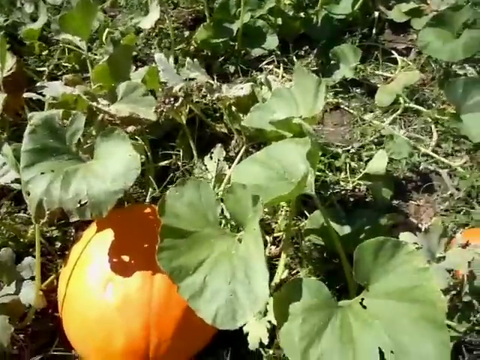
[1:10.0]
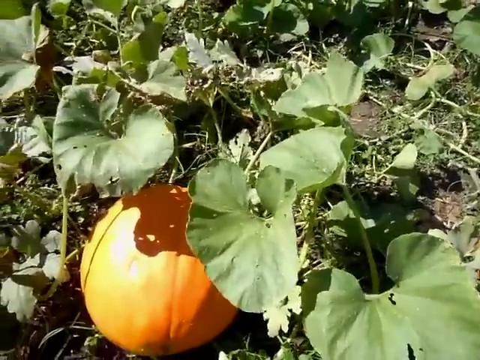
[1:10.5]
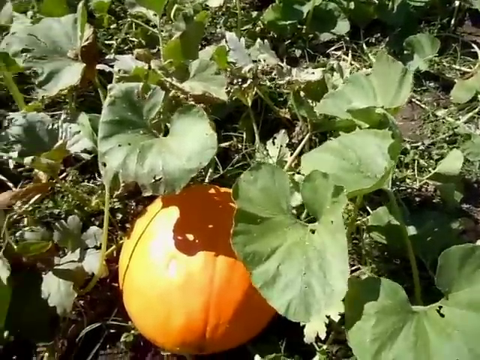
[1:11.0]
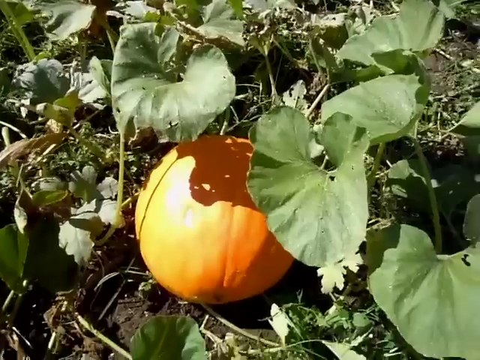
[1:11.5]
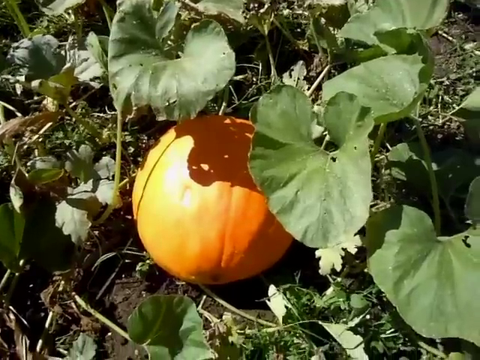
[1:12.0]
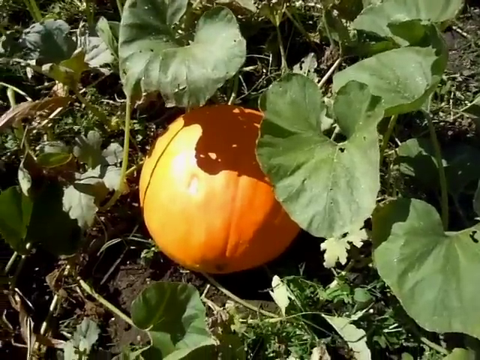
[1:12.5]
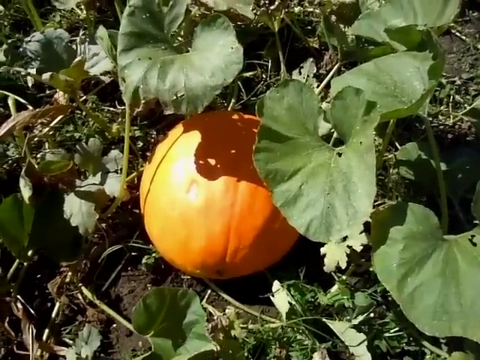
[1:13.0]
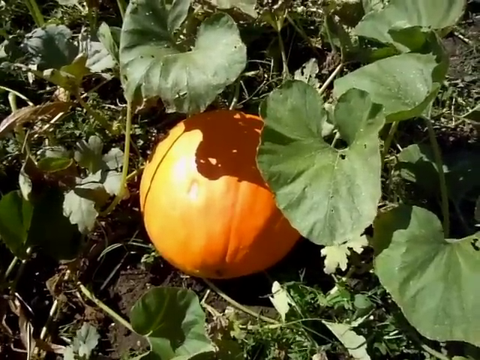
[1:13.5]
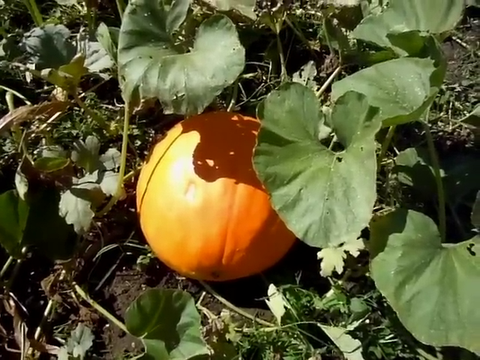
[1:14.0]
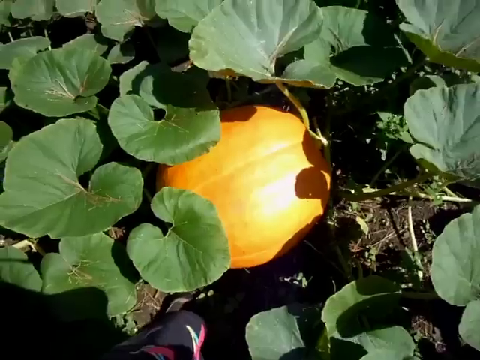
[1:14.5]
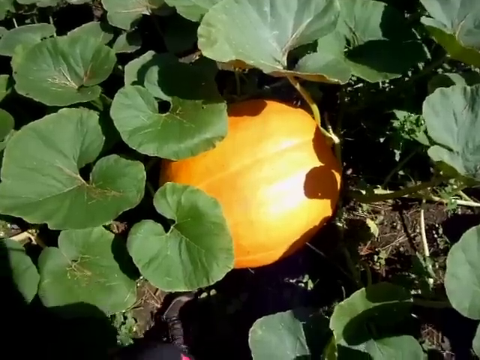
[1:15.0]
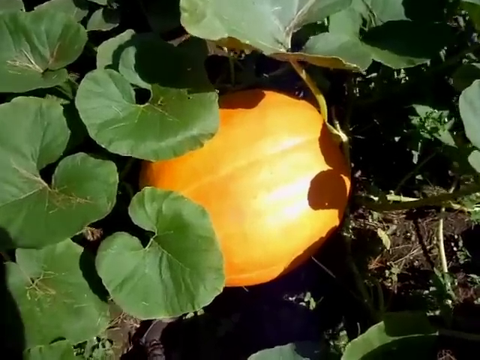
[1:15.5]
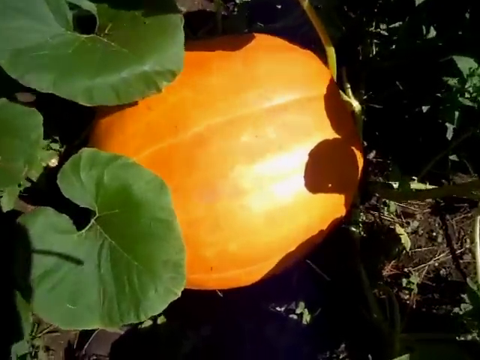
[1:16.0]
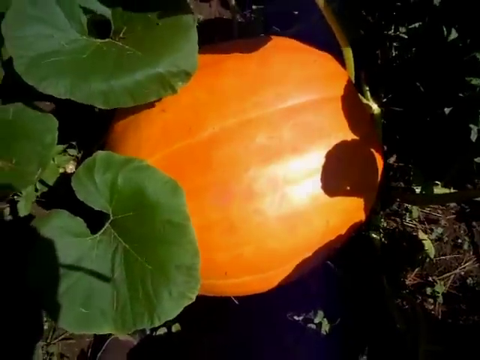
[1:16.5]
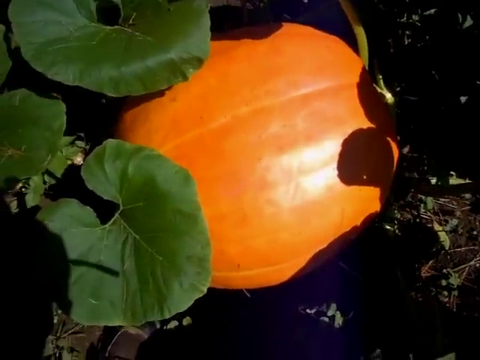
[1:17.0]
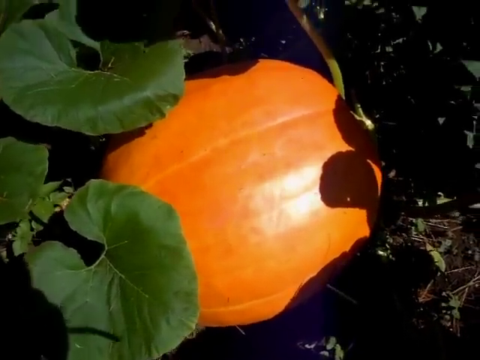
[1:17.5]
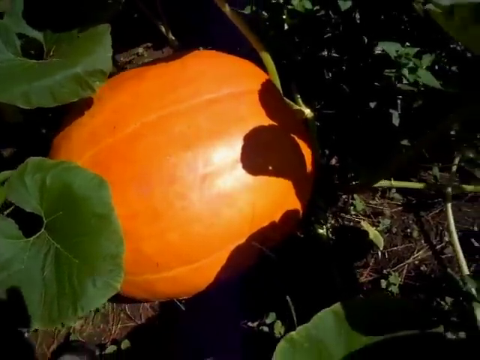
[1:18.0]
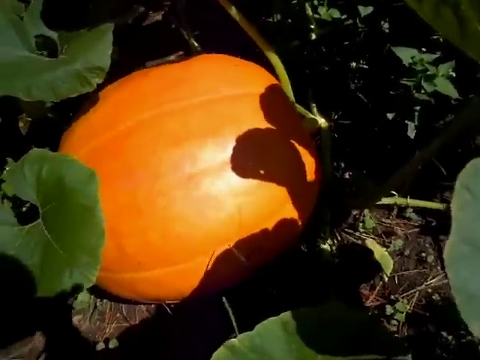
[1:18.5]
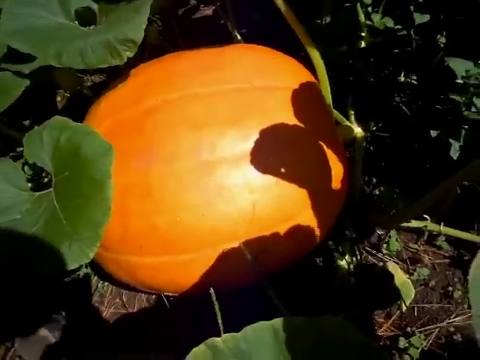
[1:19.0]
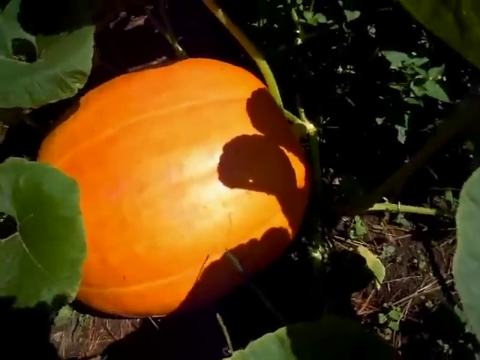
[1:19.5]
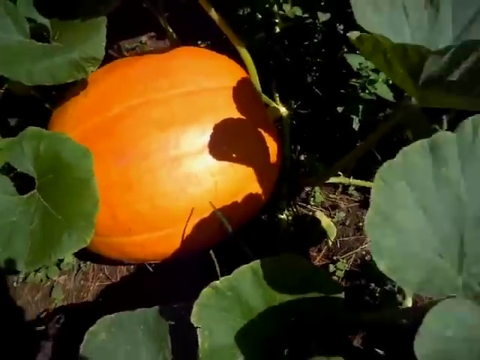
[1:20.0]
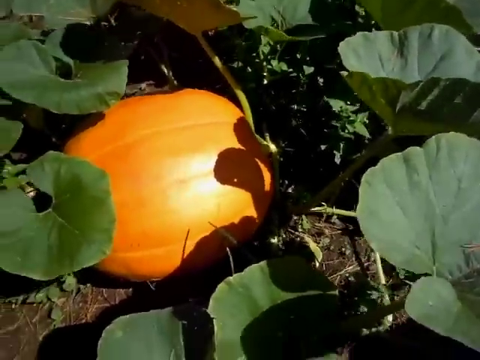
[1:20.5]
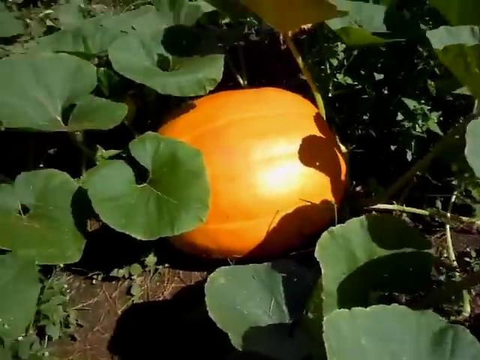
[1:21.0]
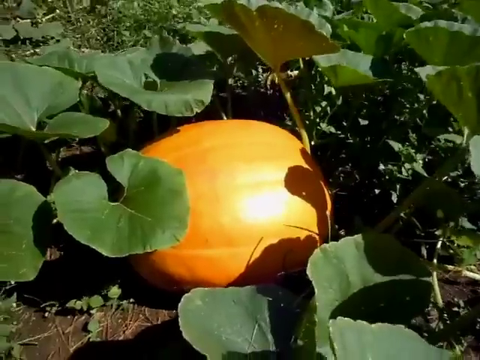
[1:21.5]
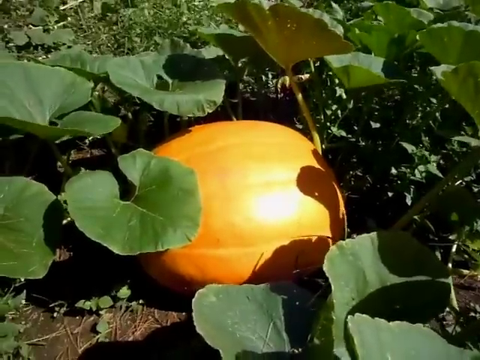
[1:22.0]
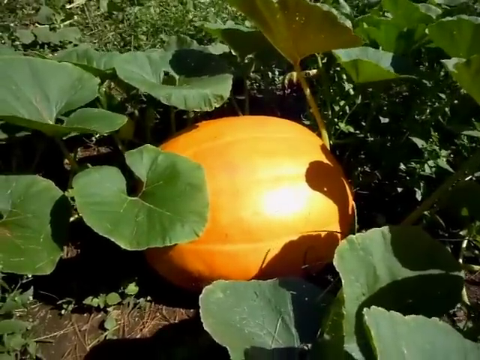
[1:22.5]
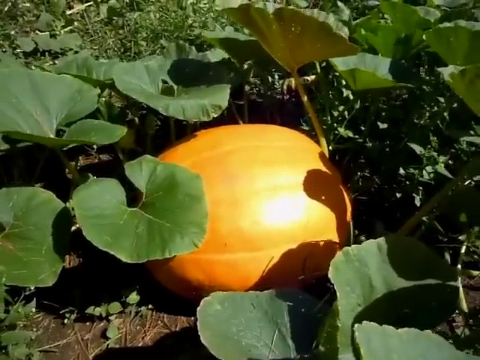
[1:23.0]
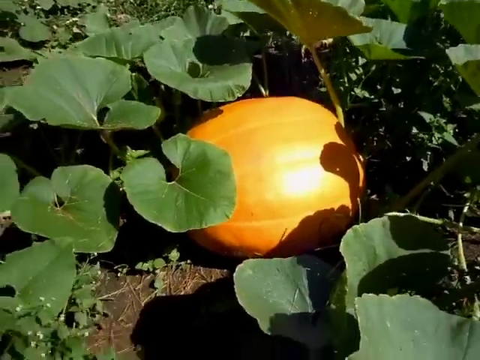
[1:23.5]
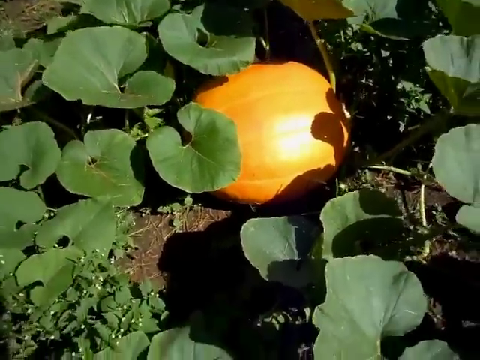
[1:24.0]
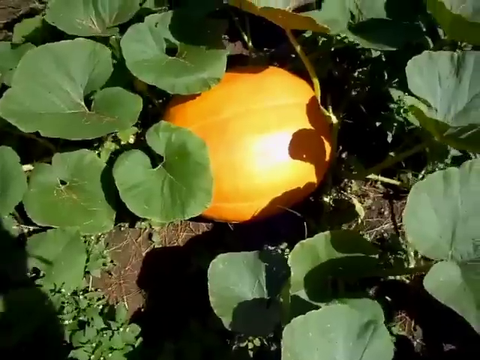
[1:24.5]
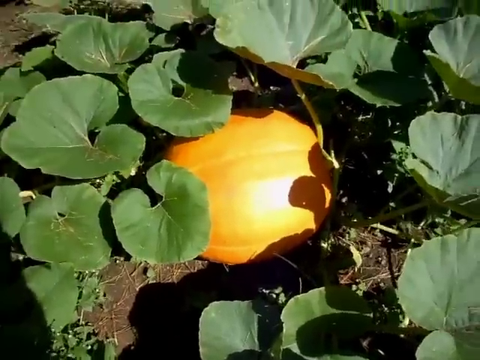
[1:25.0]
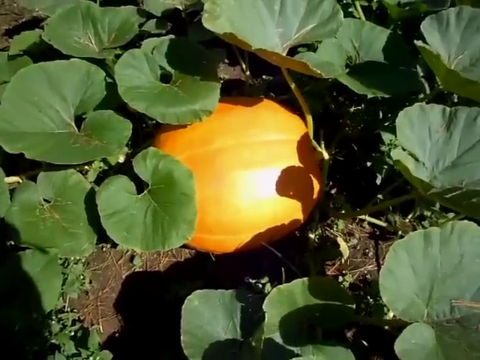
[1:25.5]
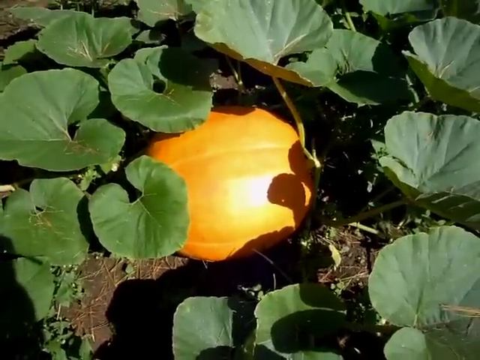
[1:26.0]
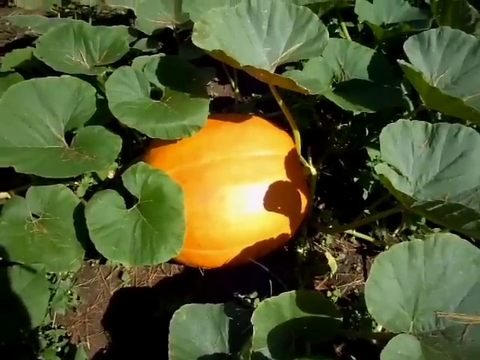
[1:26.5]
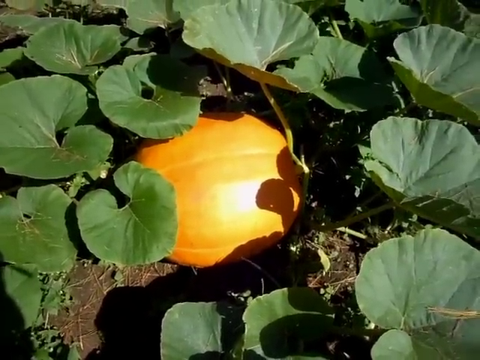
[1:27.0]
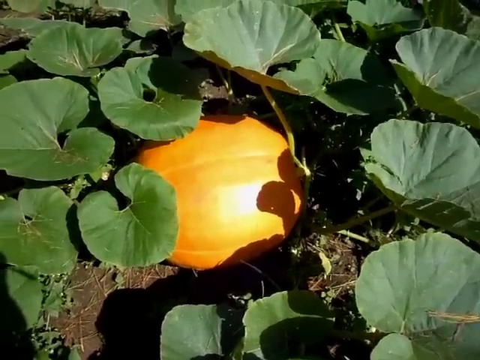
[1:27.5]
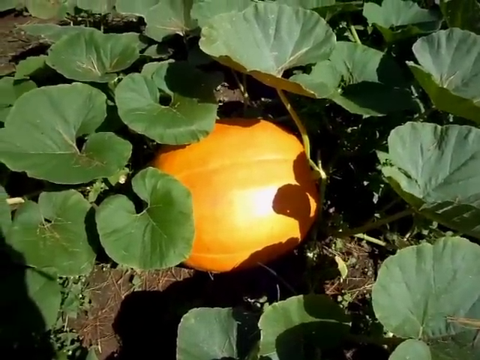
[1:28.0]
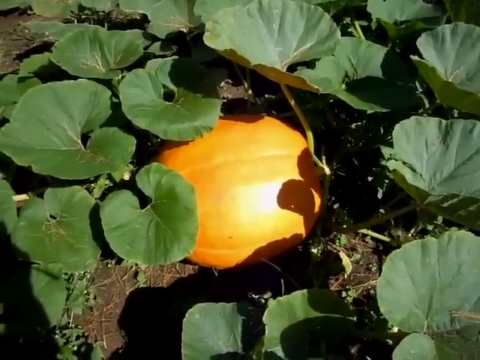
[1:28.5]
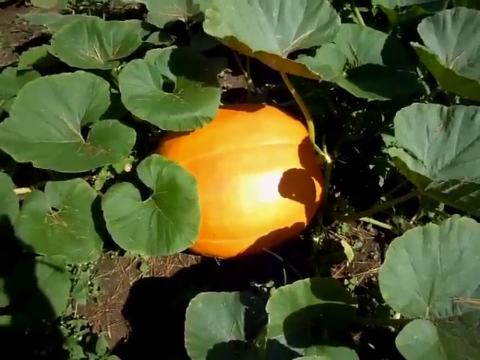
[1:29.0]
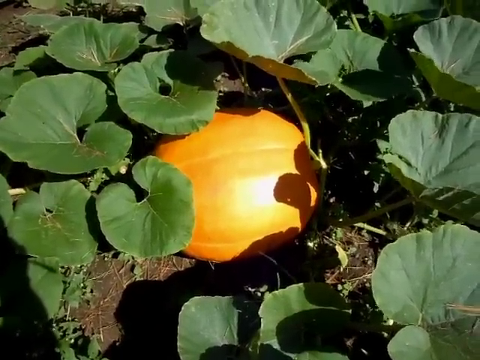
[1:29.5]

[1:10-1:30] Two pumpkins are visible. The larger one is on the lower left side of the screen, with sunlight falling on it and a divot where something probably bit it. On the opposite side, toward the far right at the bottom, is the outline of another pumpkin, not entirely visible. Large pumpkin vines, uniformly green and healthy looking, fill the rest of the screen. The camera pans down closer to the larger pumpkin. The scene then changes to yet another pumpkin, seen closer up. The camera moves closer to it. Several leaves surround the pumpkin, bright sunlight shines off it, and shadows of other leaves fall across its right side. The wind is blowing, and the pumpkin leaves are moving in it.